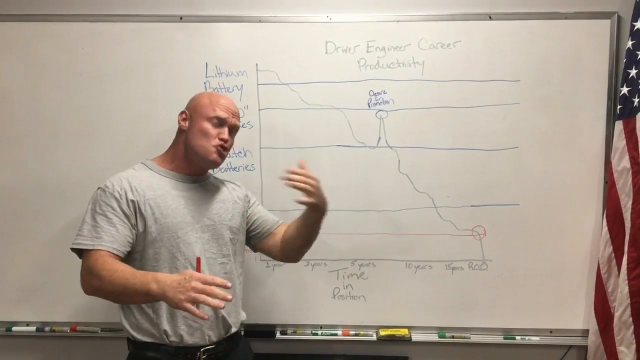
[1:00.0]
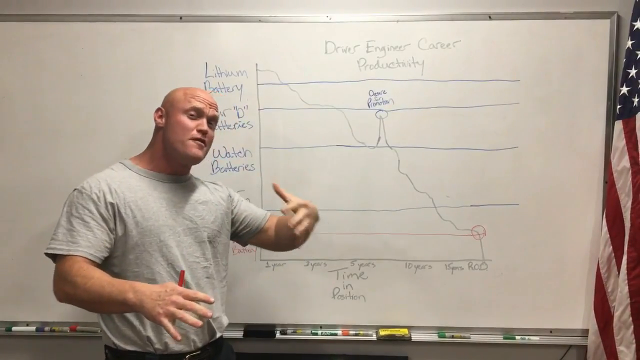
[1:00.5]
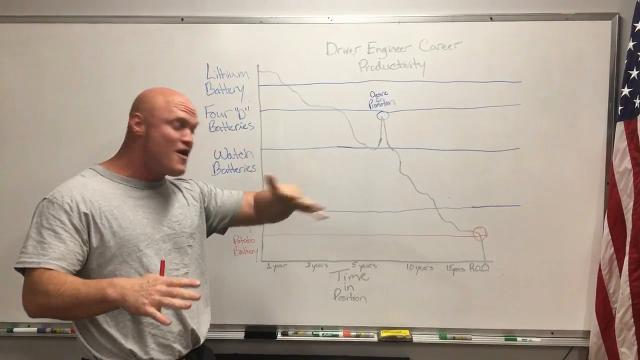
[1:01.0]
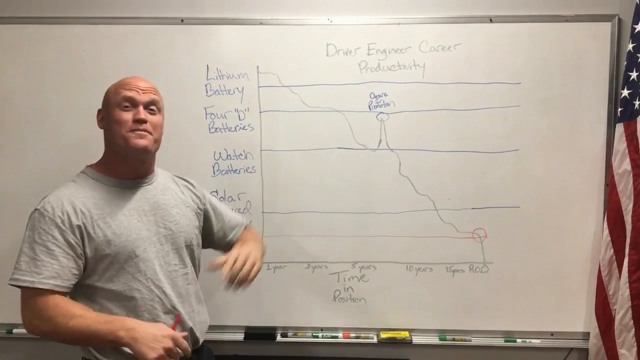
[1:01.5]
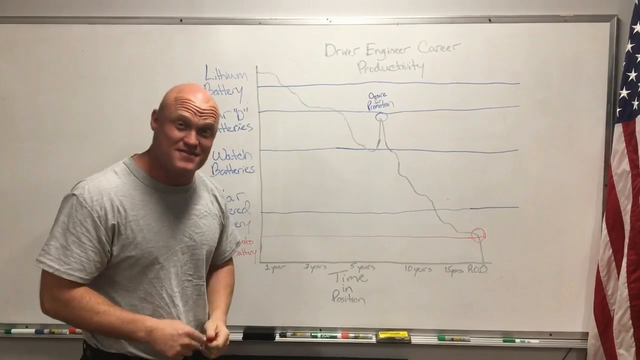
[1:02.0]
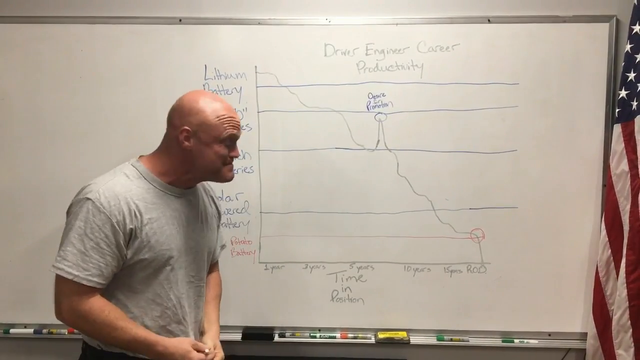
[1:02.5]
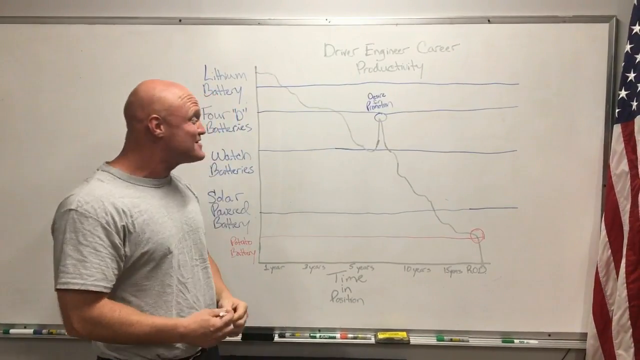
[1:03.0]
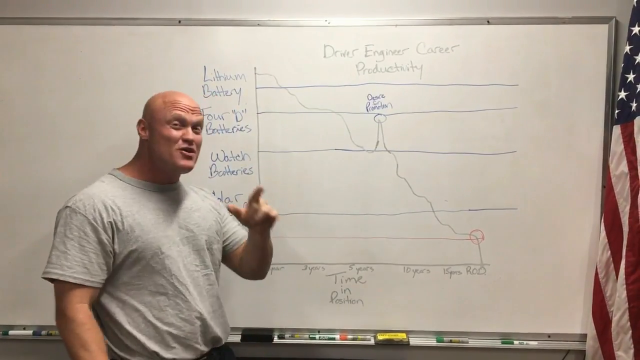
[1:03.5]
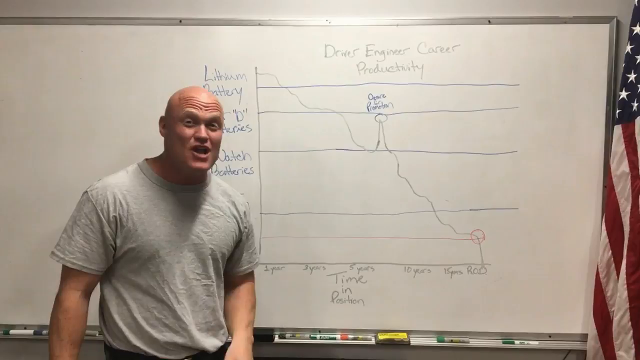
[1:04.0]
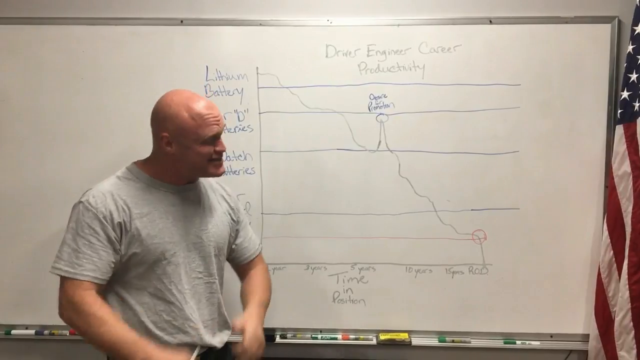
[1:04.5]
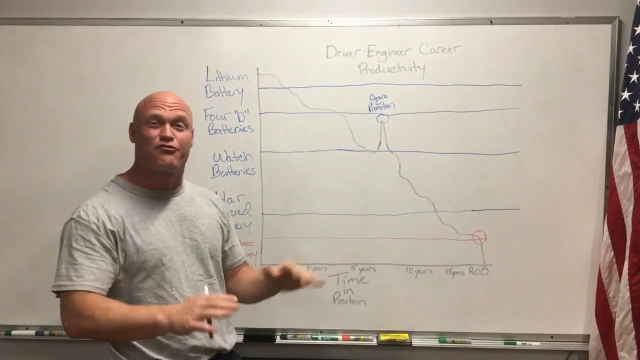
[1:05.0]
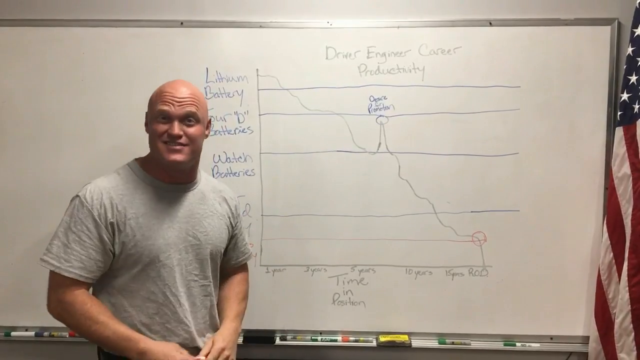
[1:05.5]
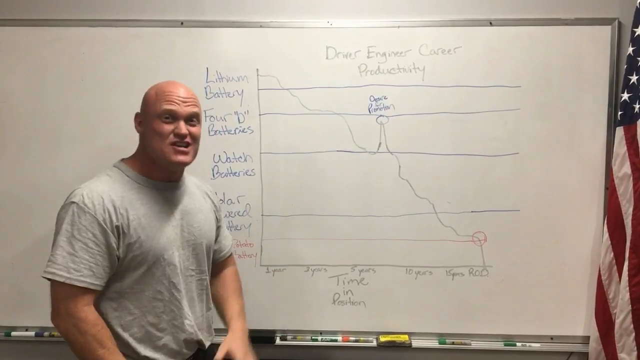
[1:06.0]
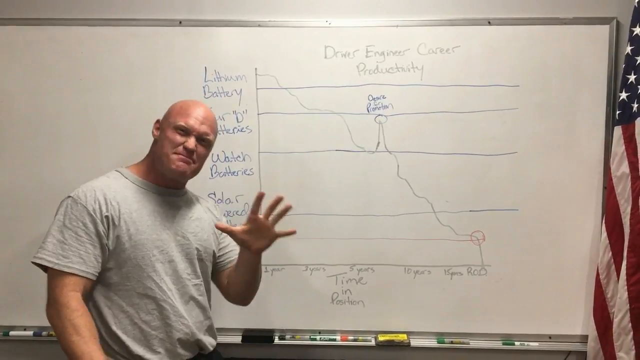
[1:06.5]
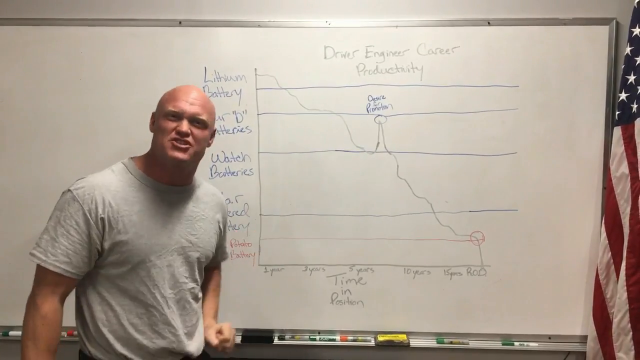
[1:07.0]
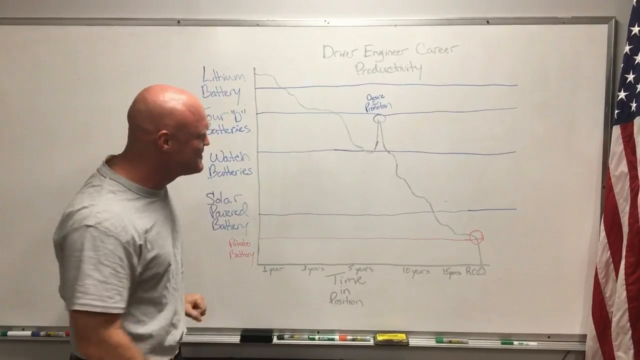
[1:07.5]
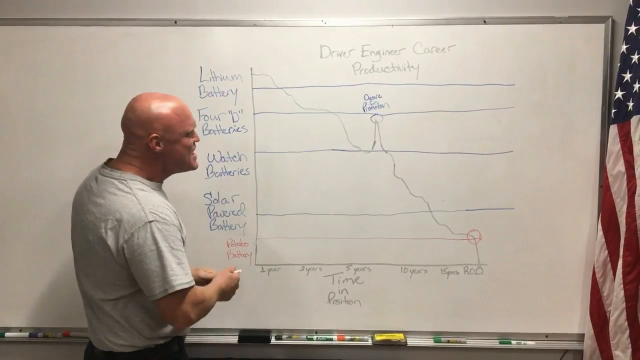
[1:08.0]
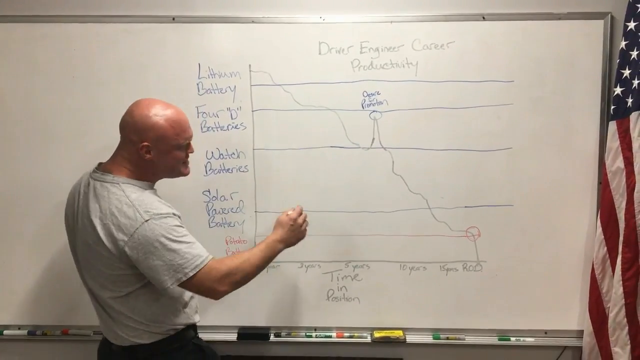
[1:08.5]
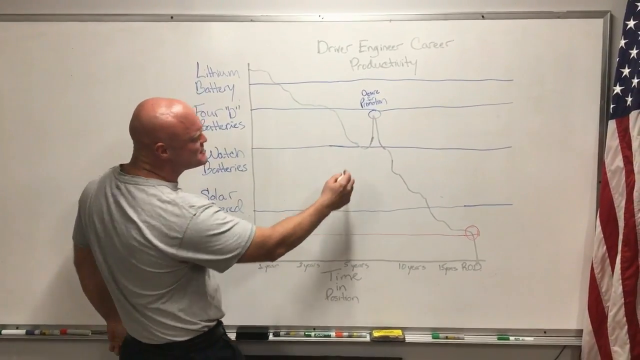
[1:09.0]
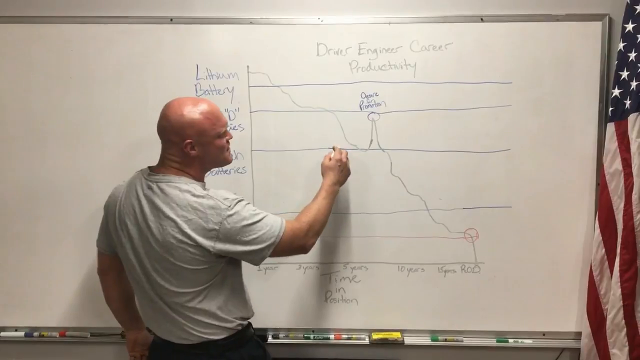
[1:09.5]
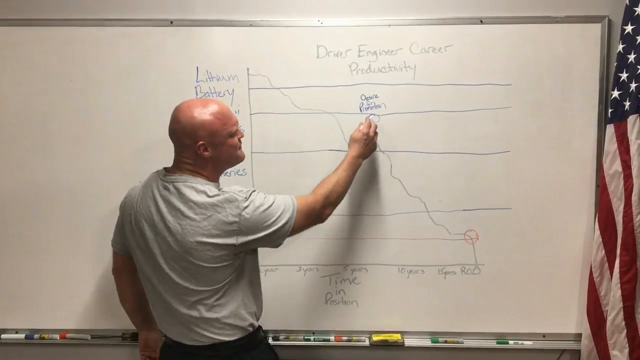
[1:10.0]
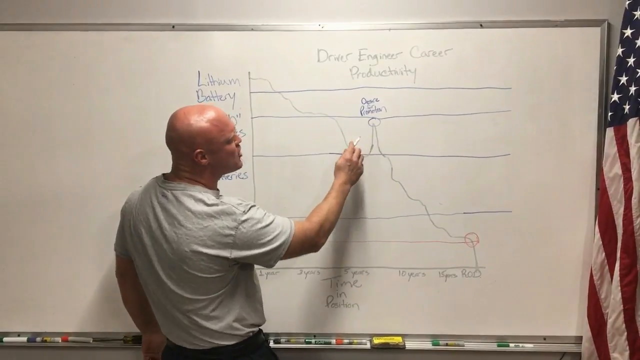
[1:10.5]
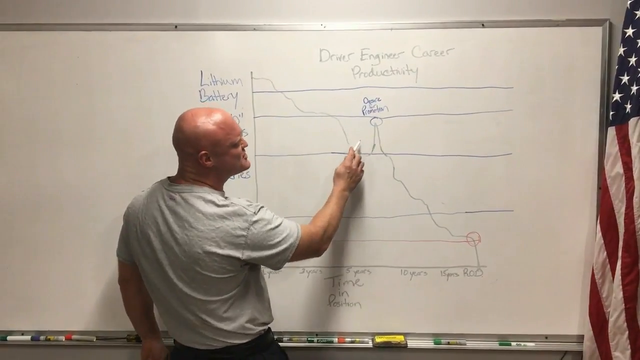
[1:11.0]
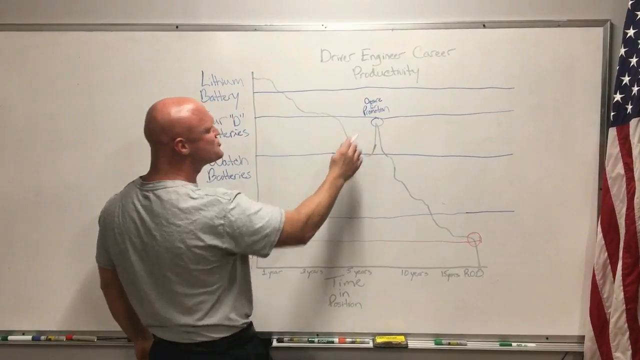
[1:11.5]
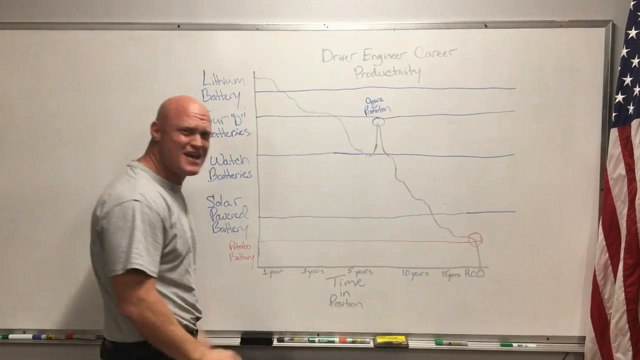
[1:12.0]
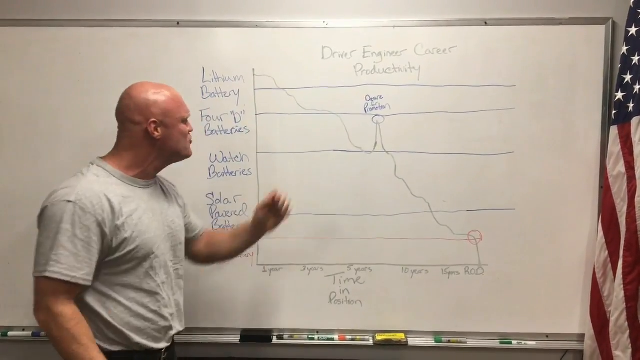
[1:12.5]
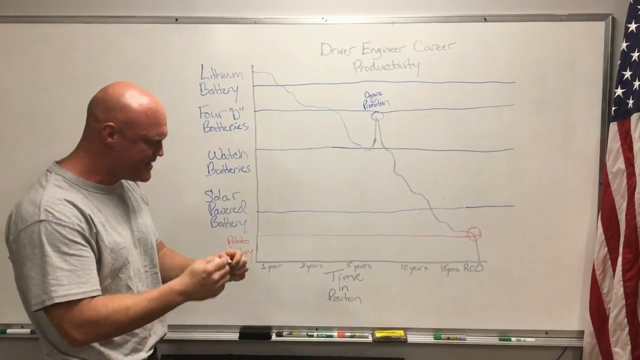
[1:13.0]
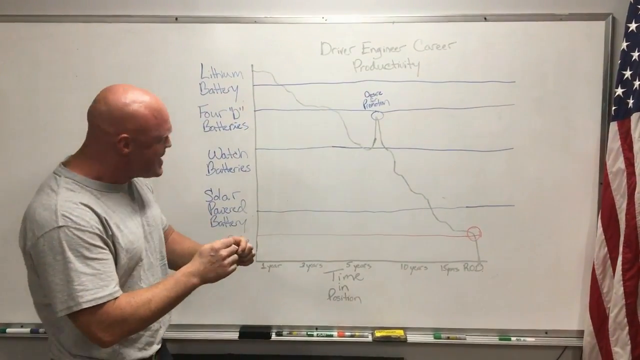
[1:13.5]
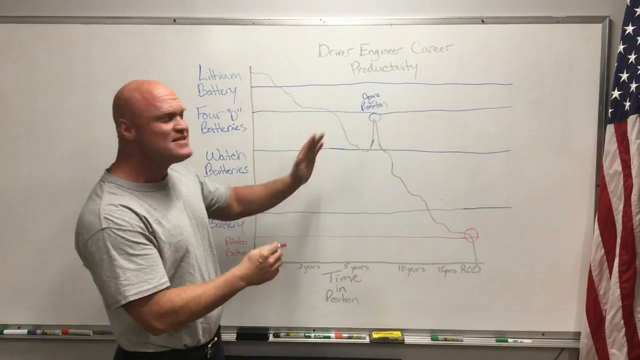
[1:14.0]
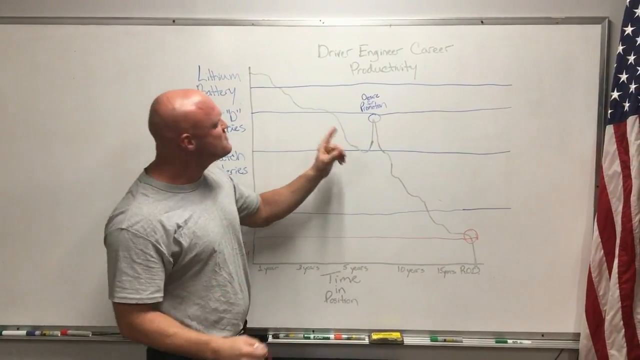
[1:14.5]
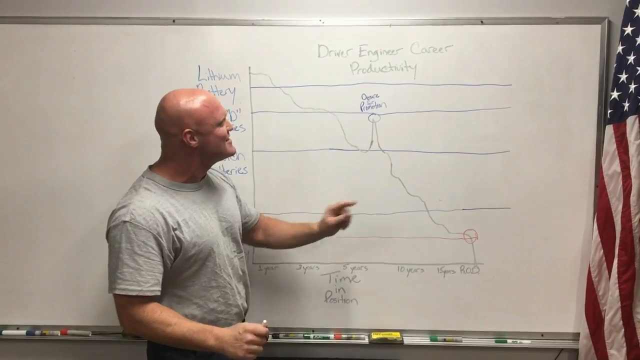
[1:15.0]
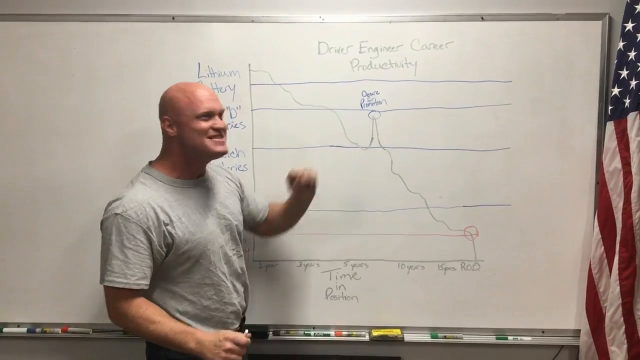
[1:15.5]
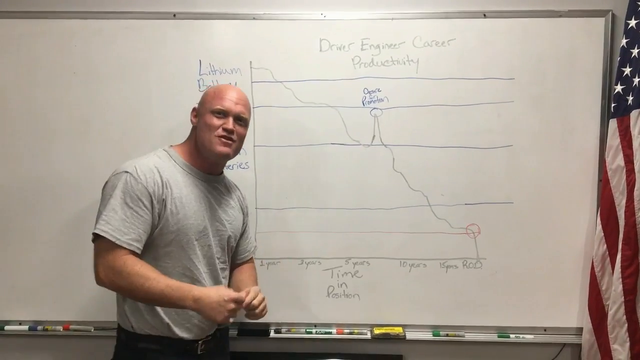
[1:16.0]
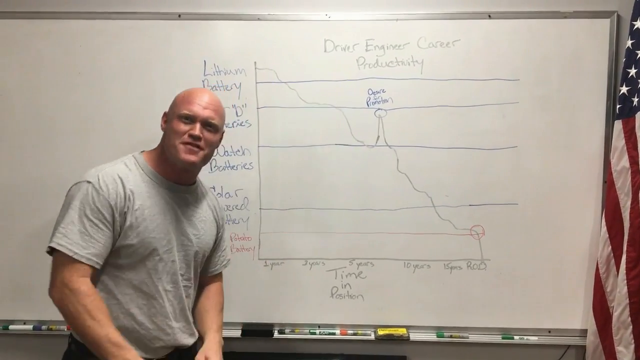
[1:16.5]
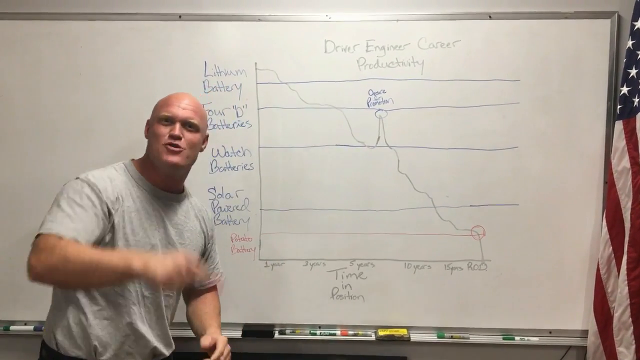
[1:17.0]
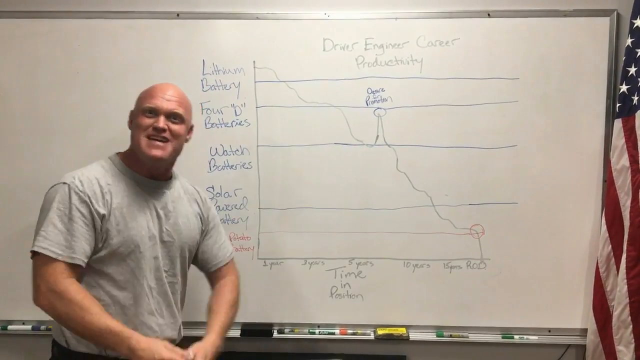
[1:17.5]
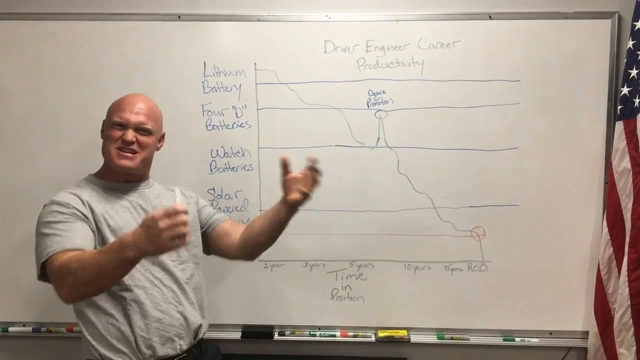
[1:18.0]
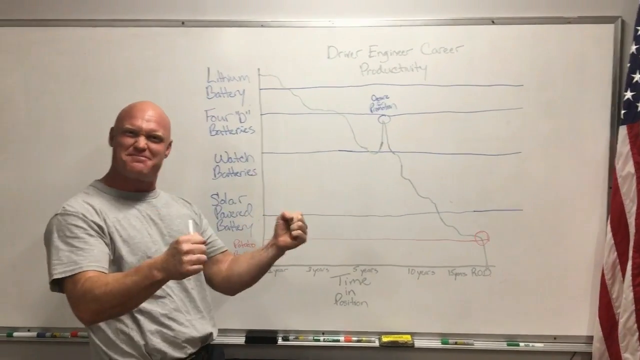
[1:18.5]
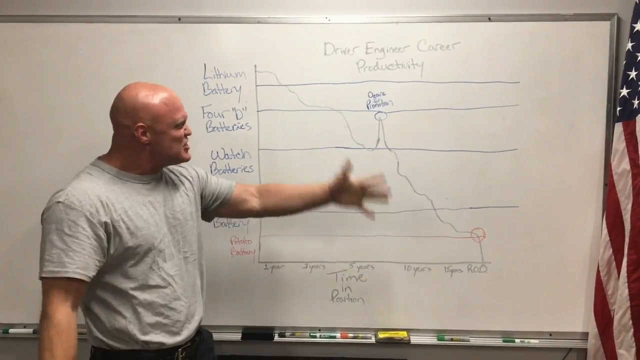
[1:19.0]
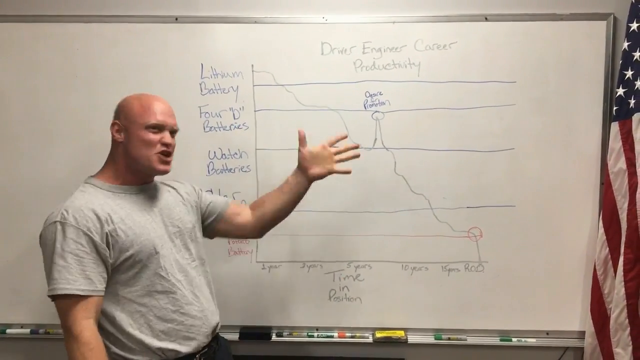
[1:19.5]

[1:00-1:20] A bald Caucasian man in a gray shirt holds a red pencil in his right hand. He stands in front of a whiteboard, and to his right is a line graph about batteries. The batteries are listed on the left side of the graph: lithium, 4D, watch and solar. The bottom of the graph has 1-year, 3-year, 5-year, 10-year and 15-year marks, with "time and positions" written below. To the right of the whiteboard is an American flag. He talks very energetically and happily, brings his pen near the middle of the graph and pretends to draw a circle with his marker. He looks back and forth between the camera and the graph with grand facial expressions. At the end he holds the red marker in his right hand while his left hand gestures toward the graph and whiteboard.